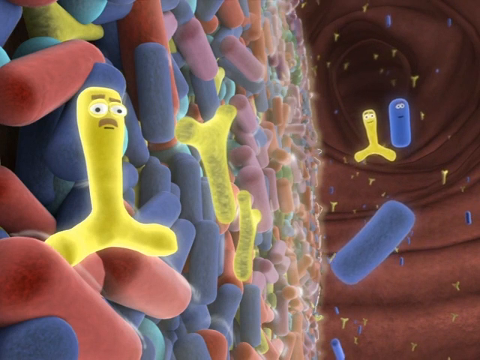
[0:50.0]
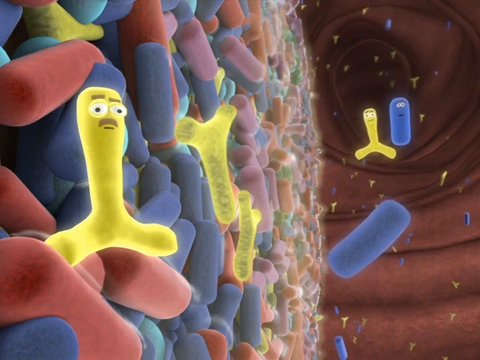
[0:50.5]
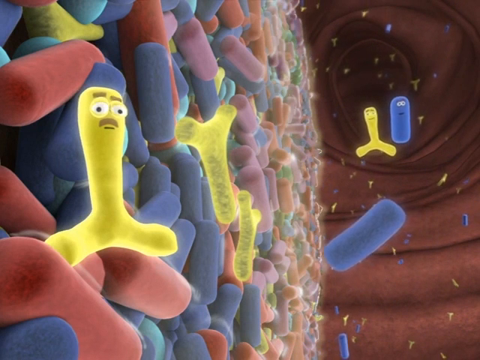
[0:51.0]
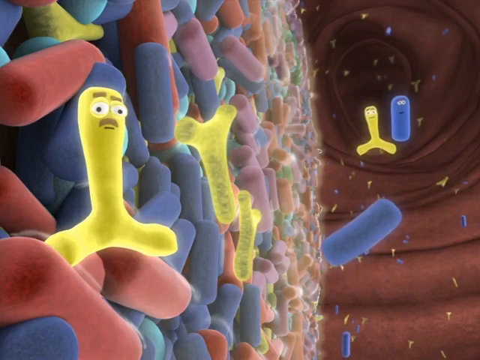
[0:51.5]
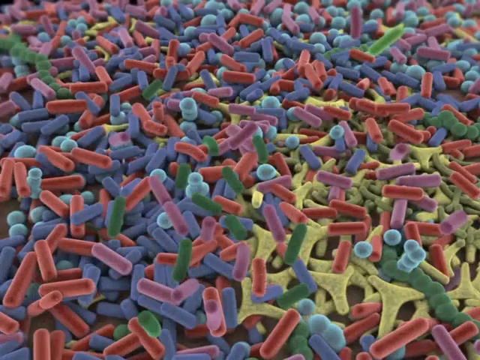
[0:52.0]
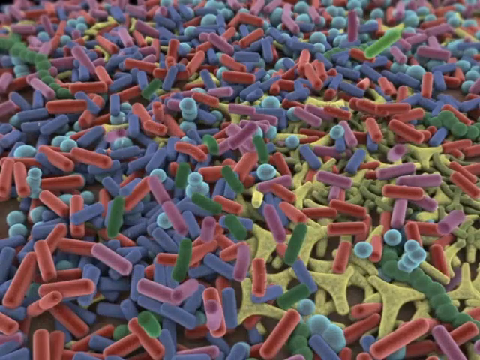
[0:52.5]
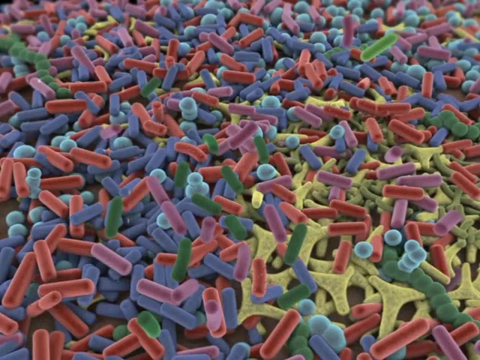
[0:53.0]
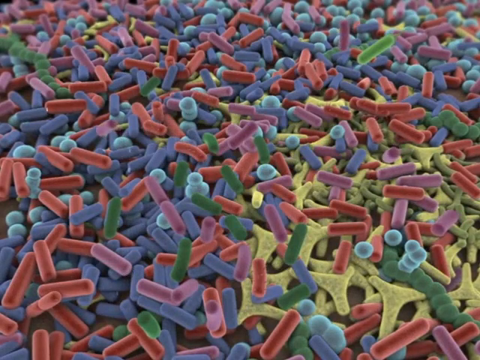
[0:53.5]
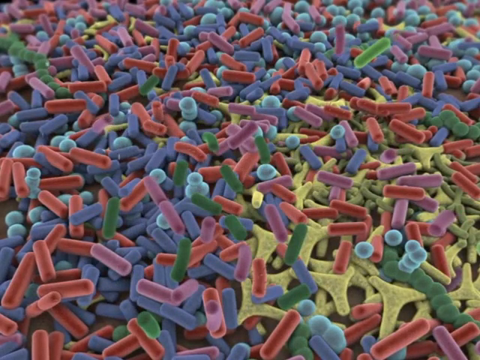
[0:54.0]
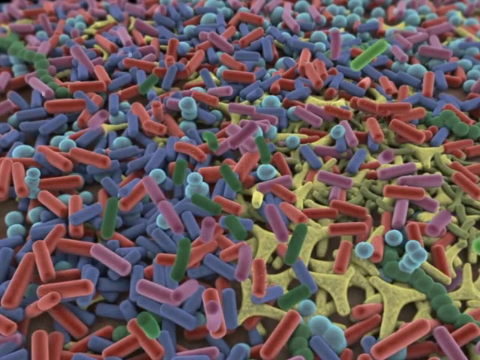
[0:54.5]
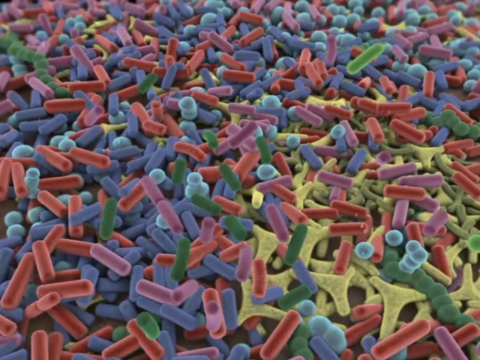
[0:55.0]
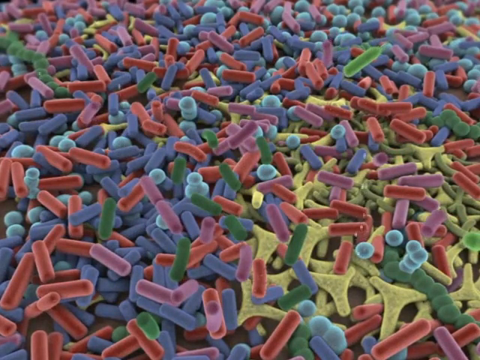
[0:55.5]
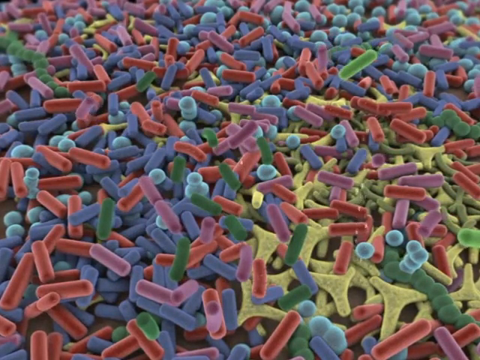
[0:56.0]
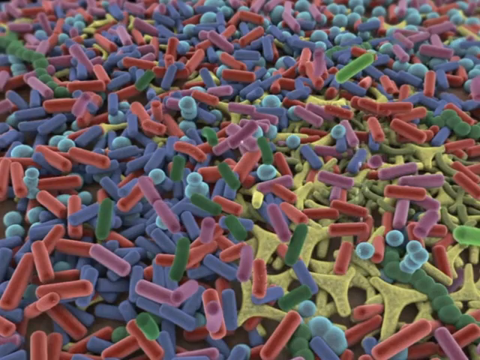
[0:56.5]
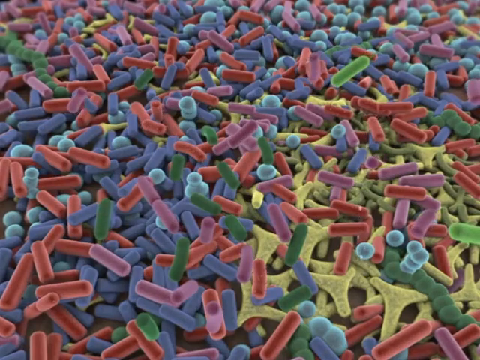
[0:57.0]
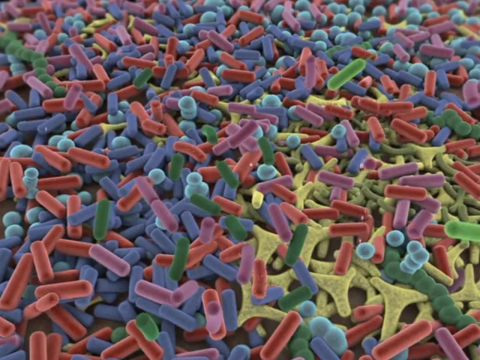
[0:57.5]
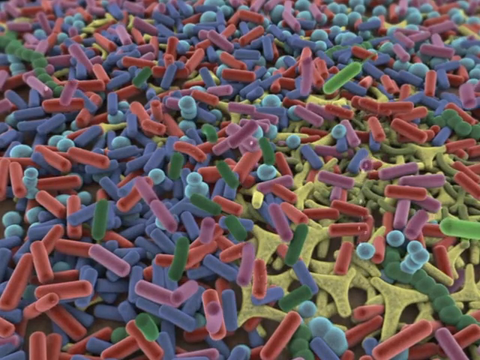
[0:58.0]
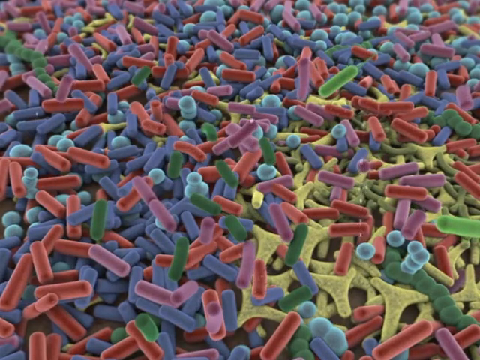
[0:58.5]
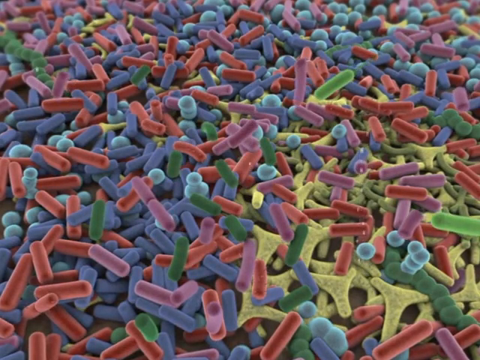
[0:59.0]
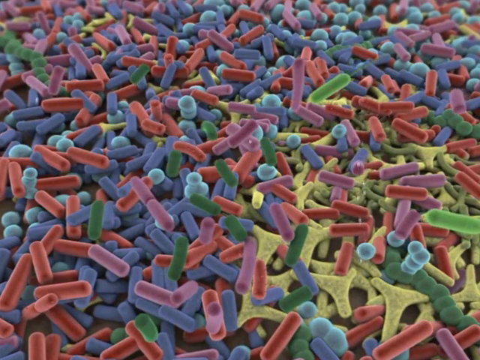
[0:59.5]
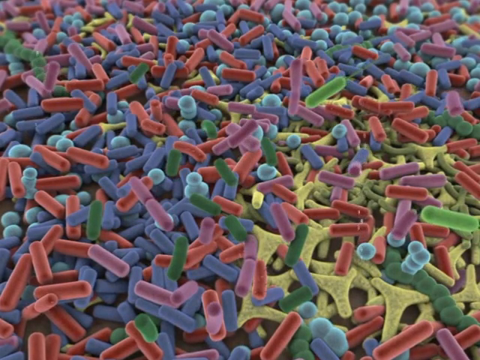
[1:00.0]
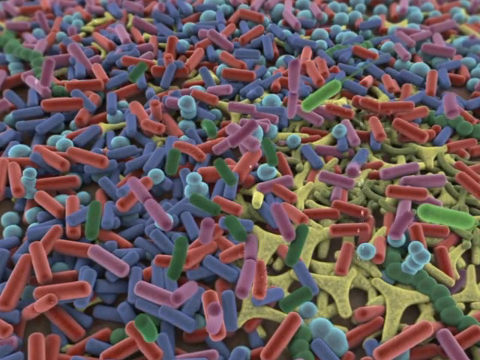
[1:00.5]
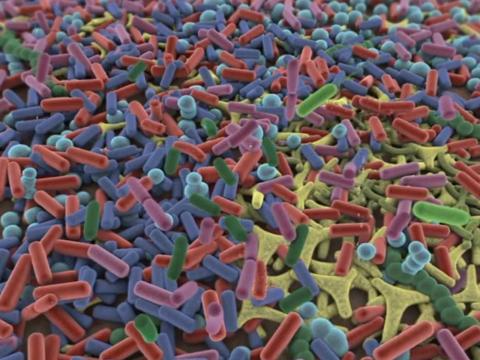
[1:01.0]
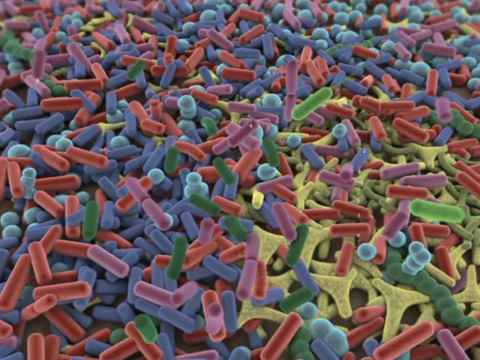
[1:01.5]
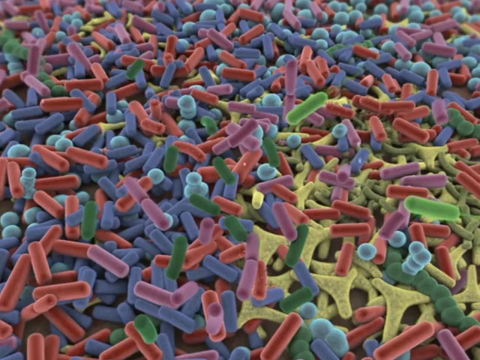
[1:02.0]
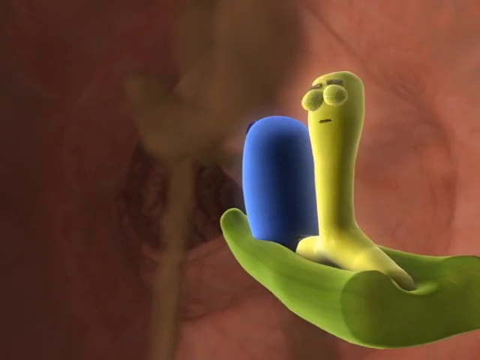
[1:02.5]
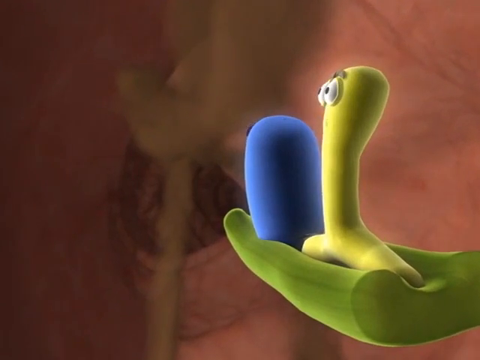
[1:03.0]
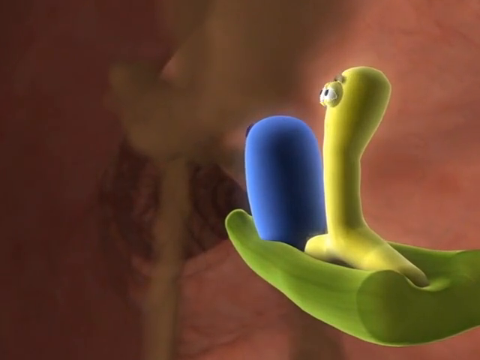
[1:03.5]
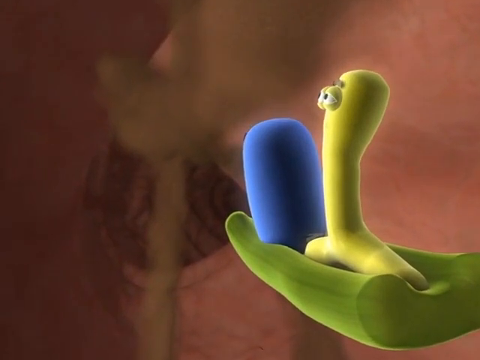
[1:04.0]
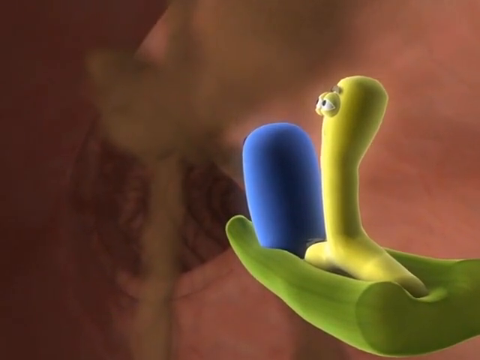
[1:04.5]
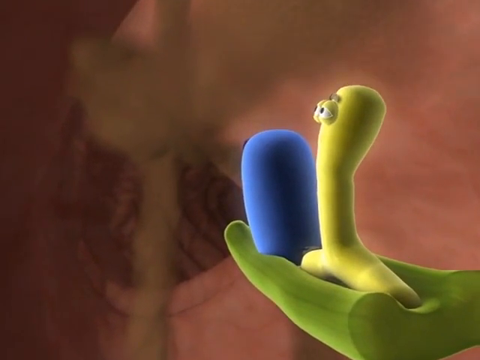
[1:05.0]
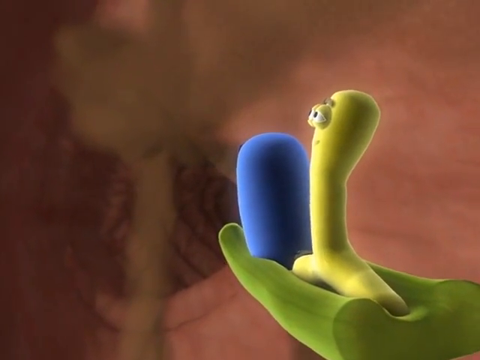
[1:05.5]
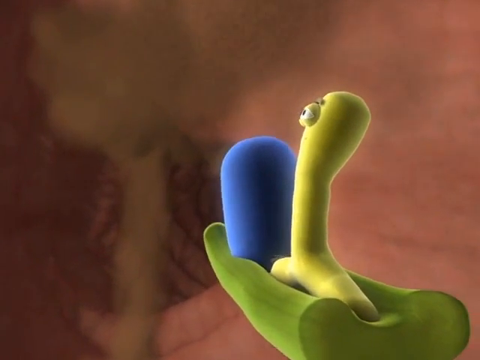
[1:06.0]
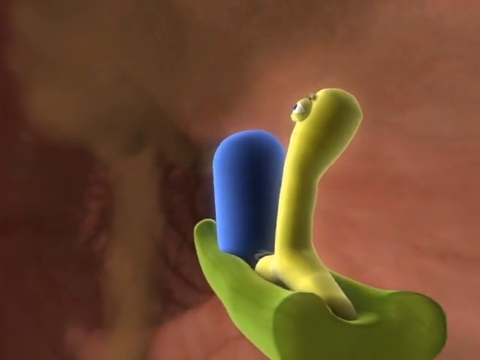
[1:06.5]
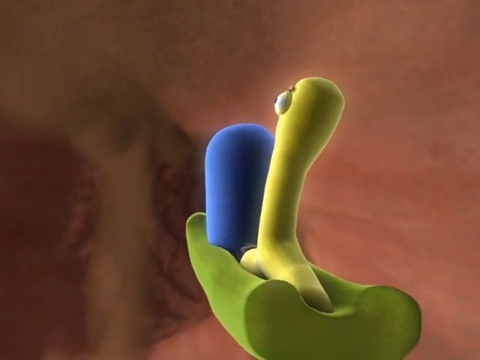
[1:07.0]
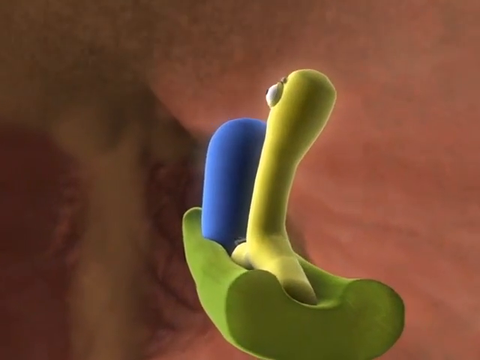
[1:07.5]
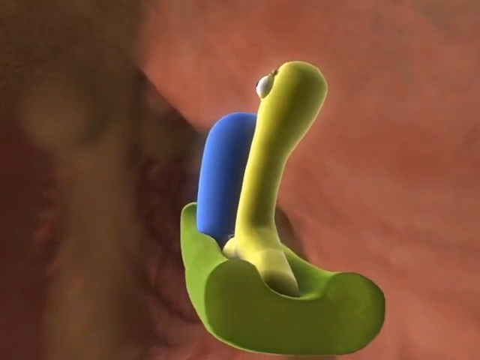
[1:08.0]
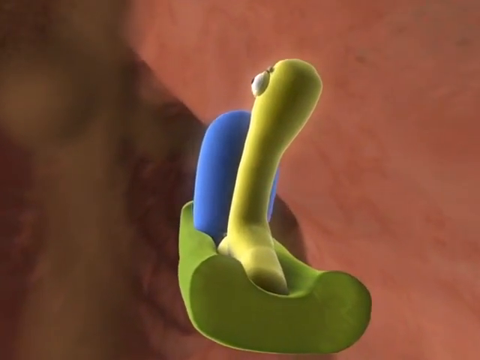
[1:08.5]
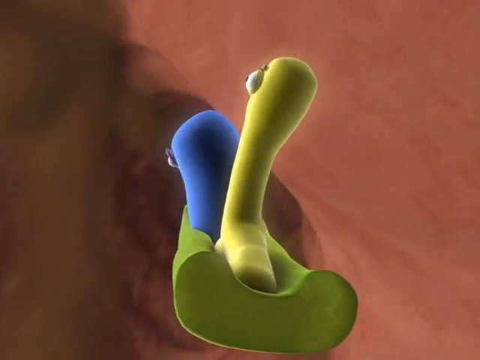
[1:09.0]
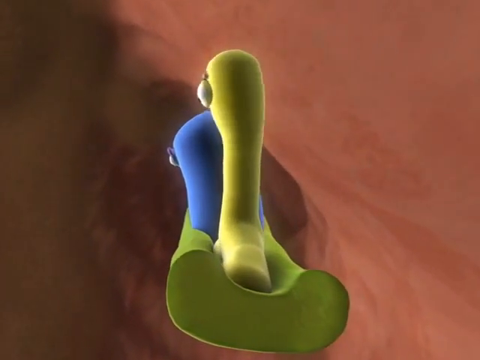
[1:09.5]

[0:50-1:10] The yellow and blue probiotics continue floating away to the right. A giant cluster of green, yellow, blue and red probiotics appears; some float around, but most are not moving and are stuck together in a cluster. The scene changes to the blue and yellow probiotics together on top of a yellow object that looks like a boat. They float into an area that looks like a tunnel inside the body, with light pink walls, and they appear to be traveling down through the digestive system. The blue probiotic is at the front and the yellow probiotic at the back of the object they are standing on.